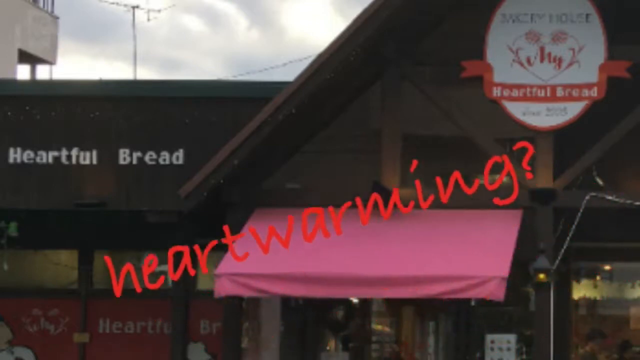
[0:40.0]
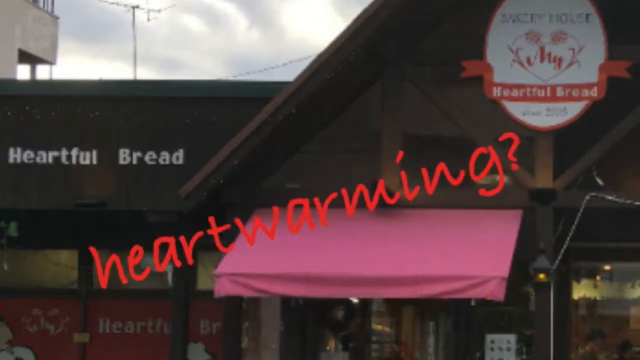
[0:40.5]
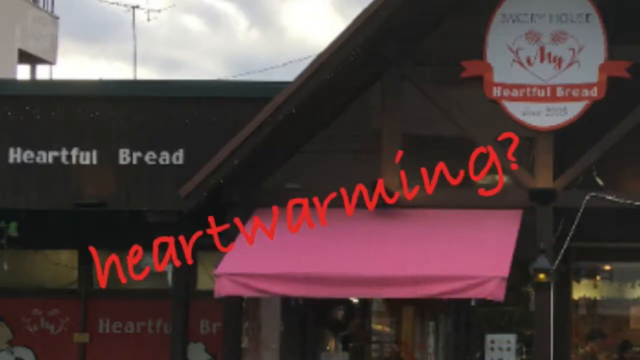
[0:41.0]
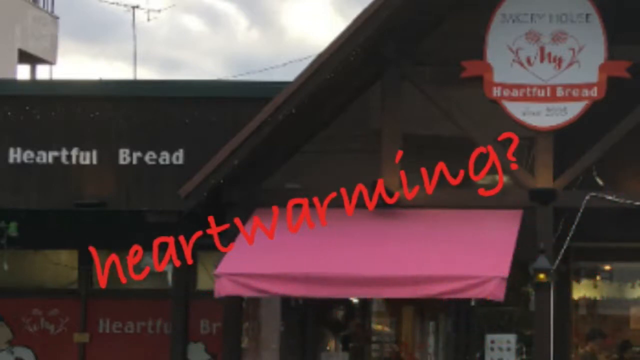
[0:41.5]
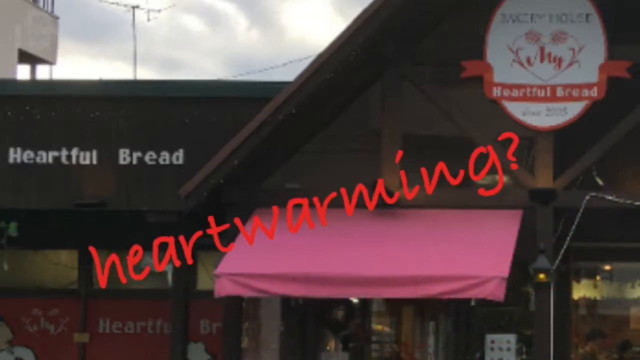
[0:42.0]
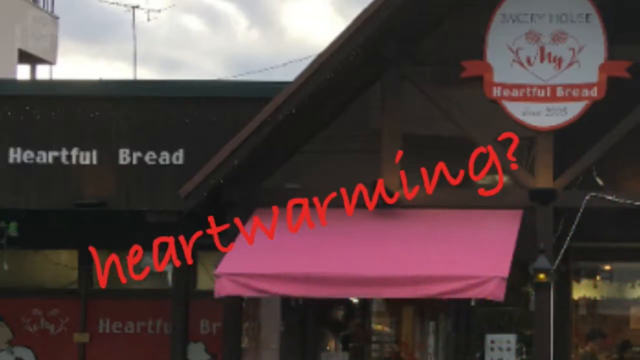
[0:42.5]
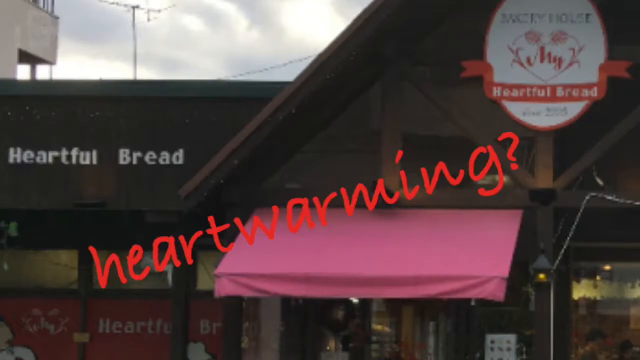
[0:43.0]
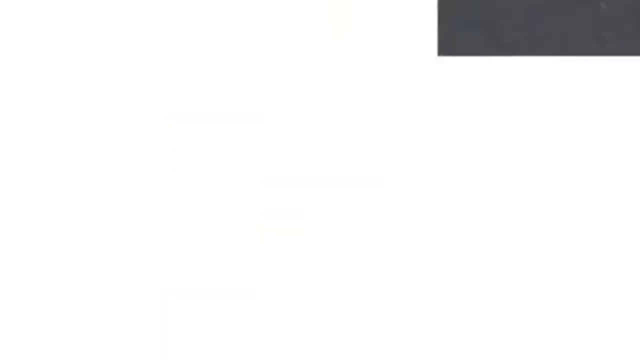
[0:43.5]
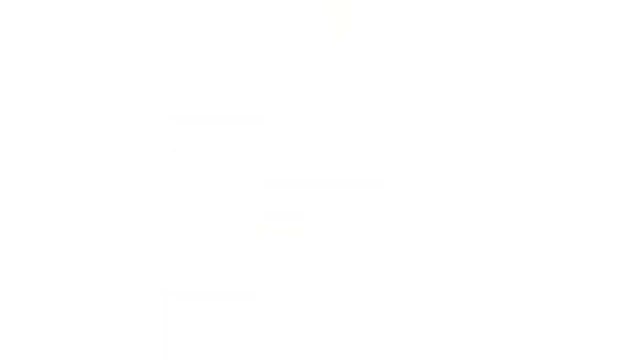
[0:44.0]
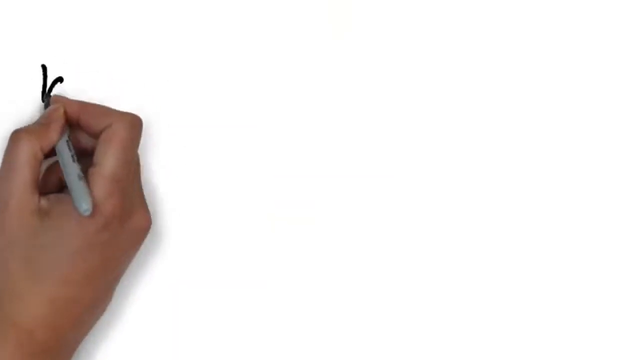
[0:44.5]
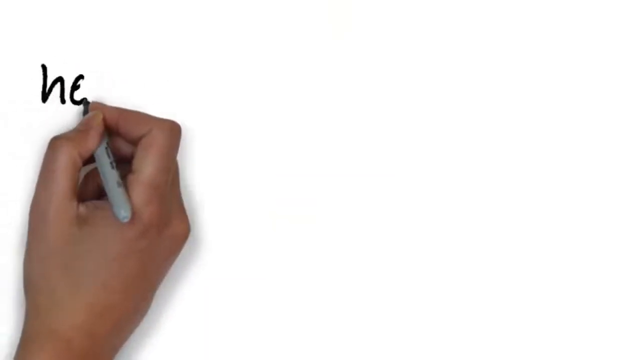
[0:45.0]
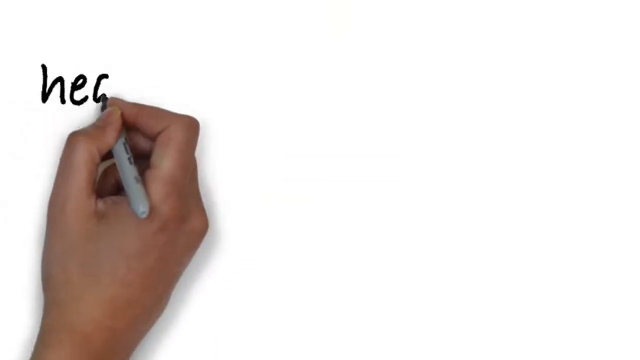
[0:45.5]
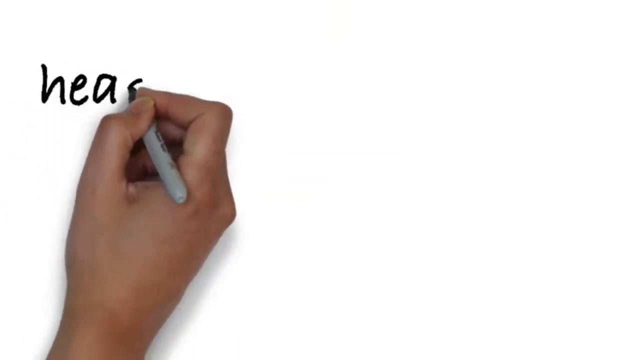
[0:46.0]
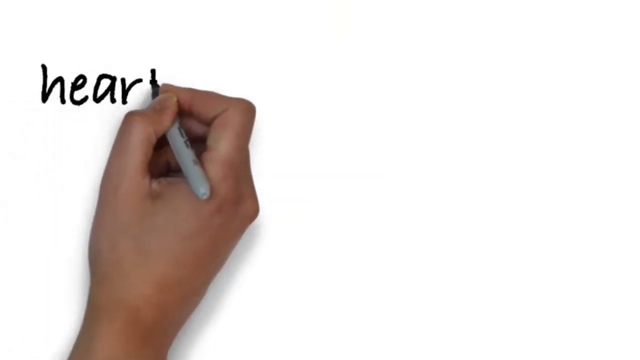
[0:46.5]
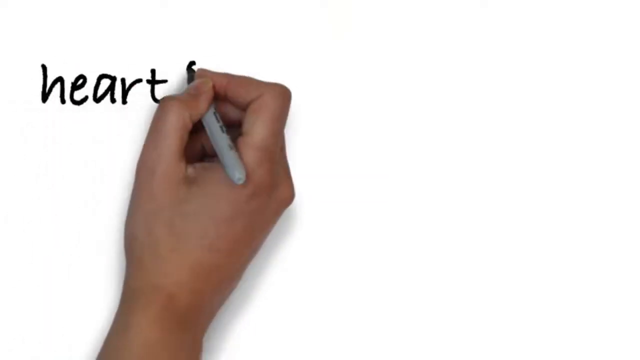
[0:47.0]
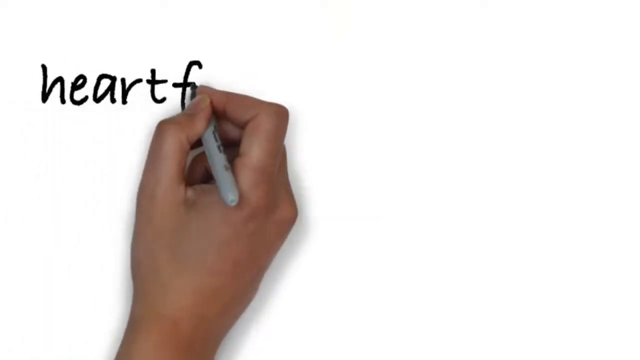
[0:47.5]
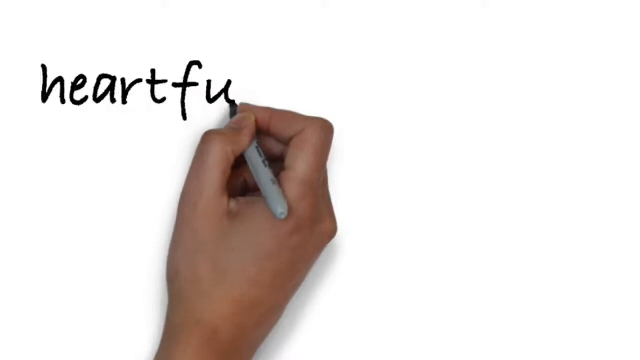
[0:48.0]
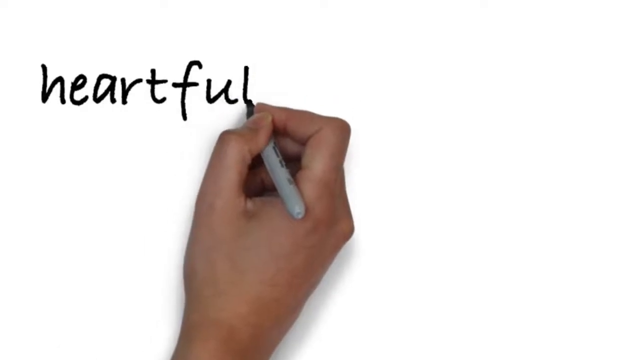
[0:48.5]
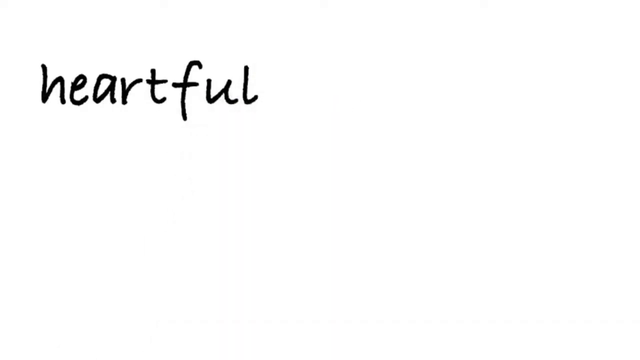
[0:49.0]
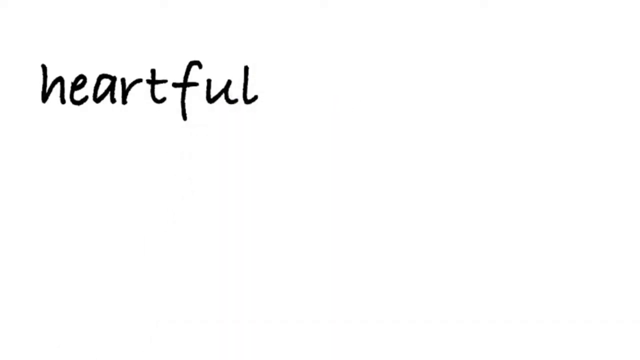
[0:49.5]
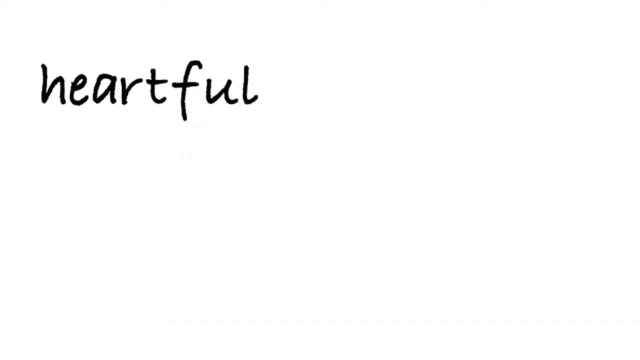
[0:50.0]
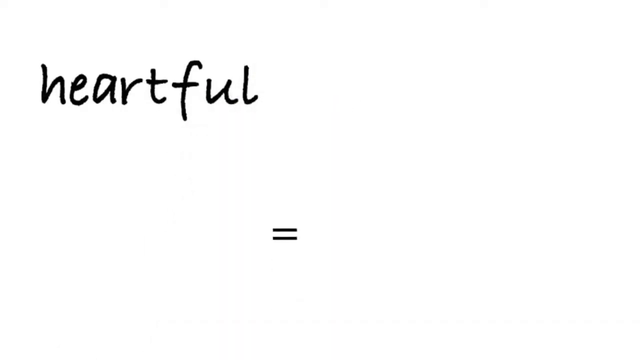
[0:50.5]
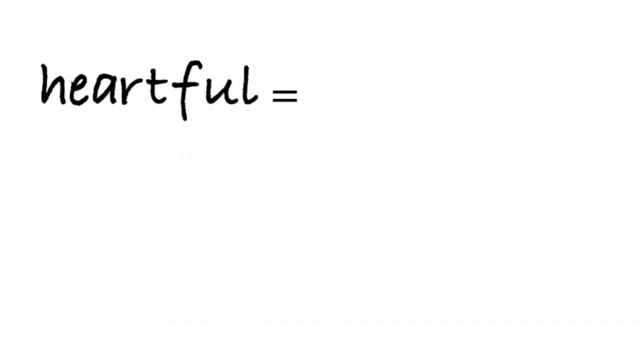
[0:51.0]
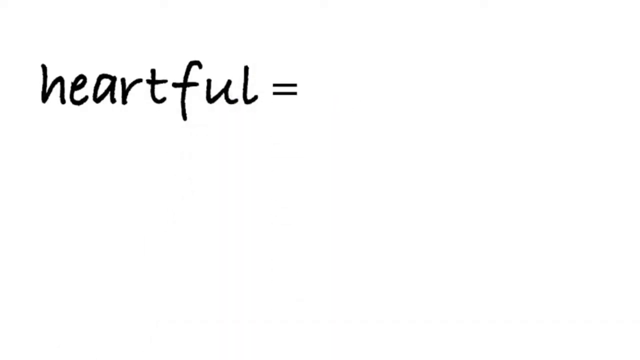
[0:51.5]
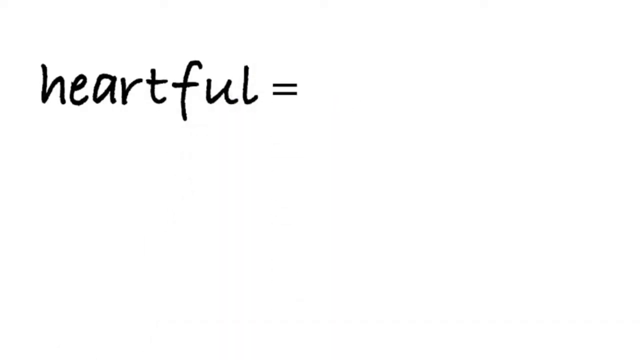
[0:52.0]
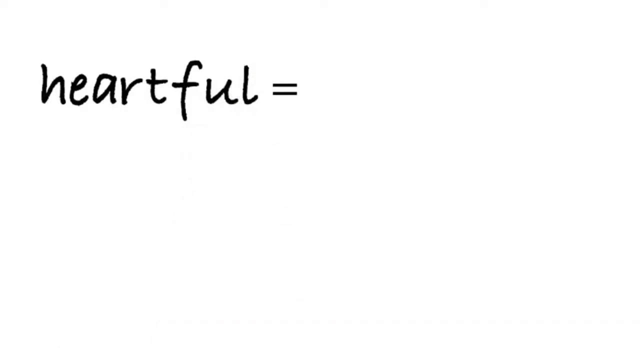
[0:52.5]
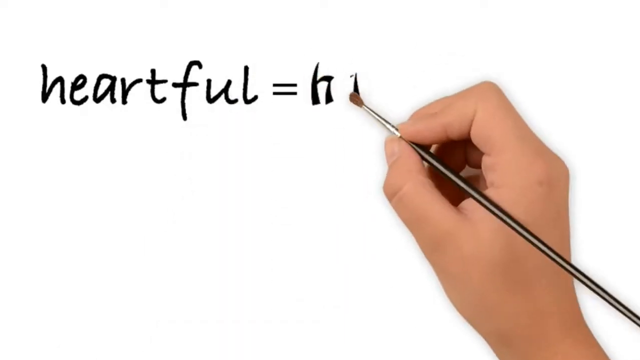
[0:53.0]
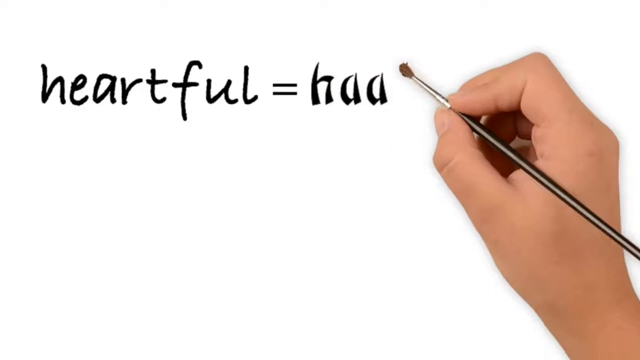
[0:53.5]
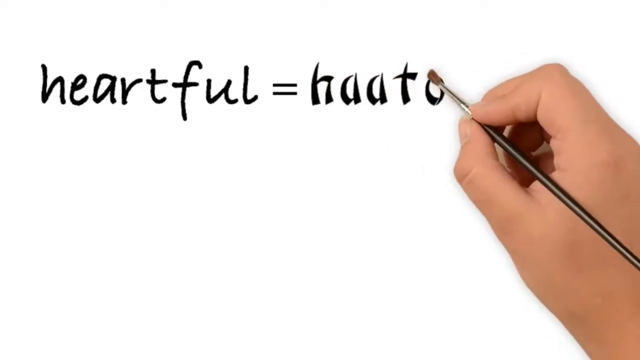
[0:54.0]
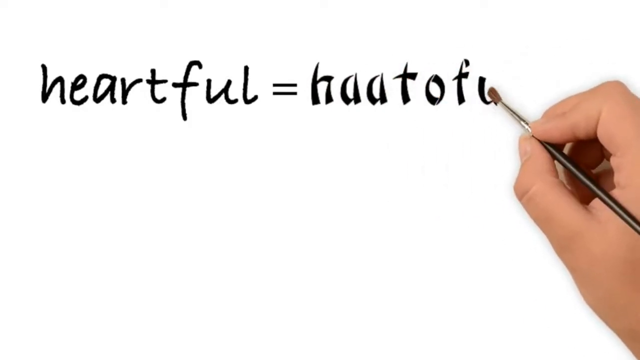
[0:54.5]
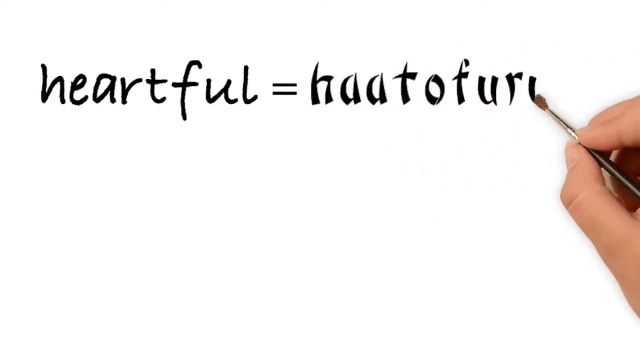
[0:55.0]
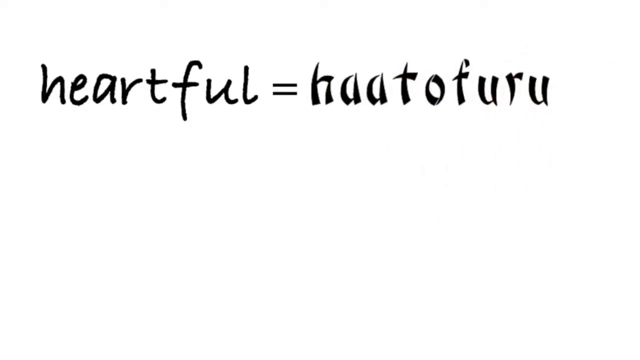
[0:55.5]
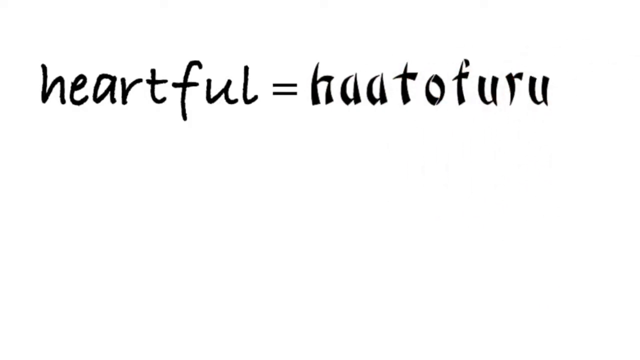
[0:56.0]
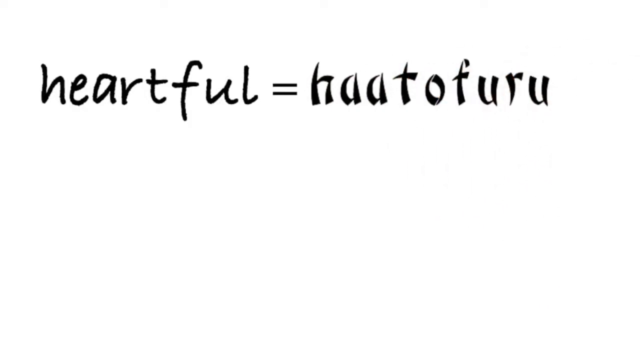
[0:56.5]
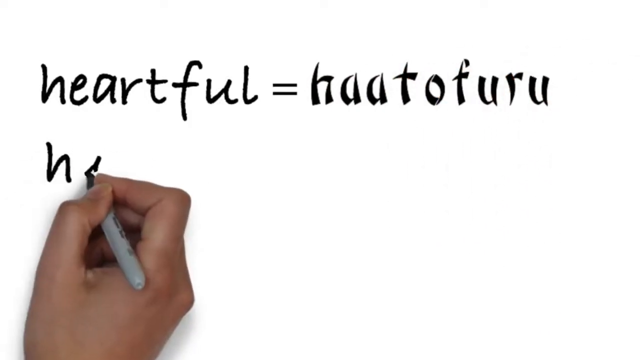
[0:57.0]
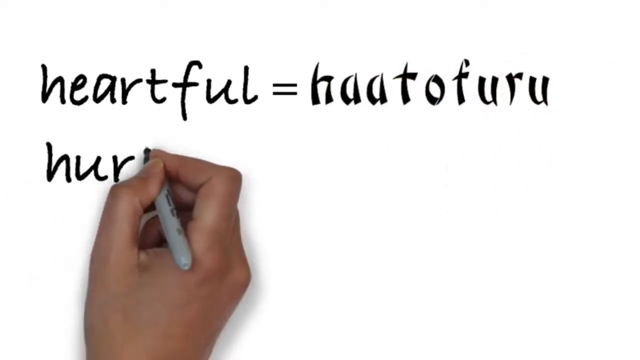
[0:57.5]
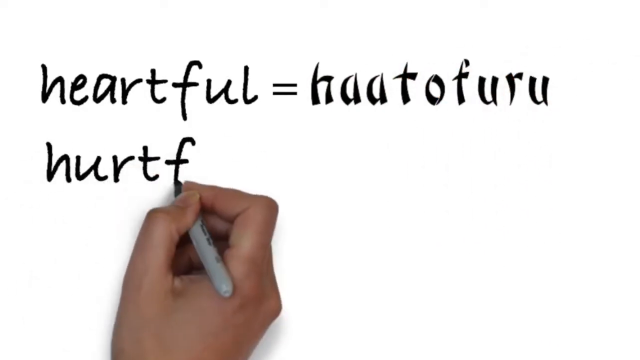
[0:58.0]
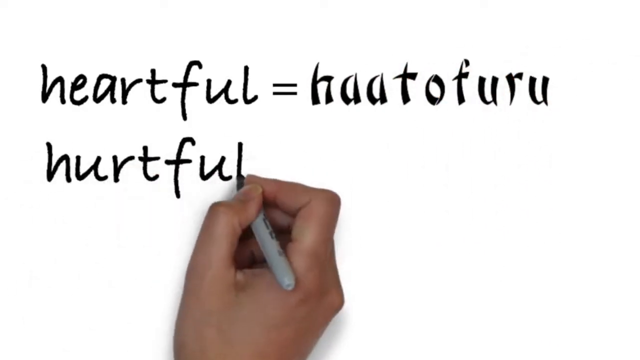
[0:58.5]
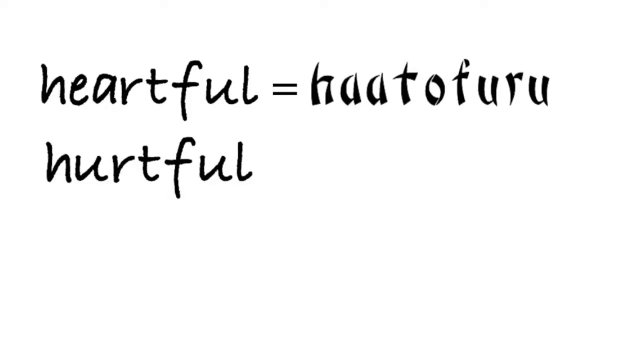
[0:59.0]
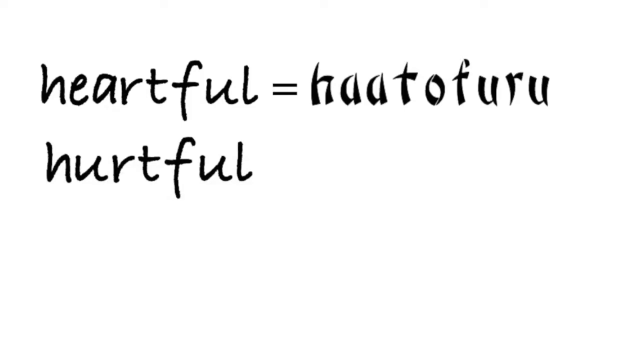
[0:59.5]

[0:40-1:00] The screen is white, with a gradient effect toward the bottom: the main portion is white, it changes into gray, and the gray darkens closer to the very bottom until it turns completely black. Nothing else appears.